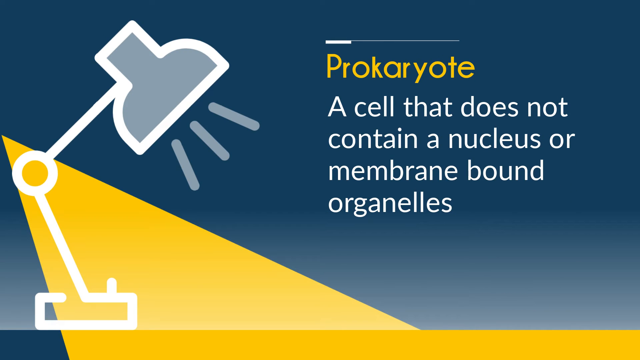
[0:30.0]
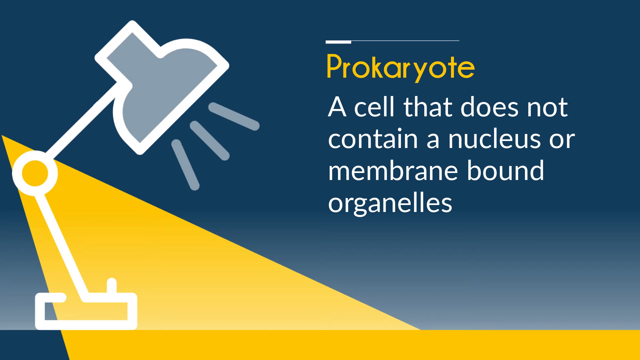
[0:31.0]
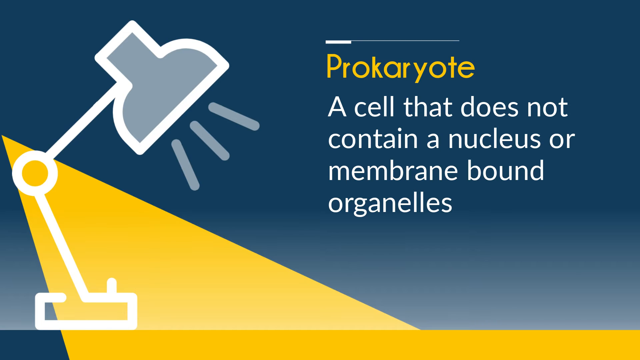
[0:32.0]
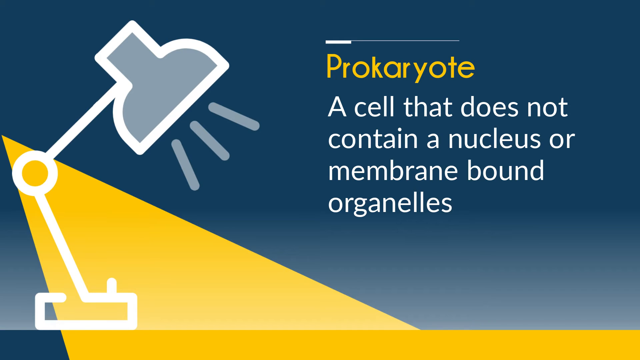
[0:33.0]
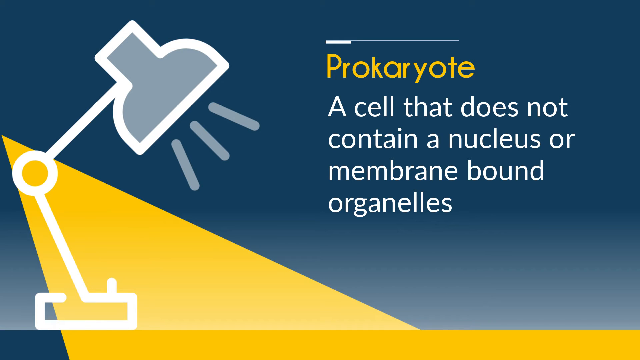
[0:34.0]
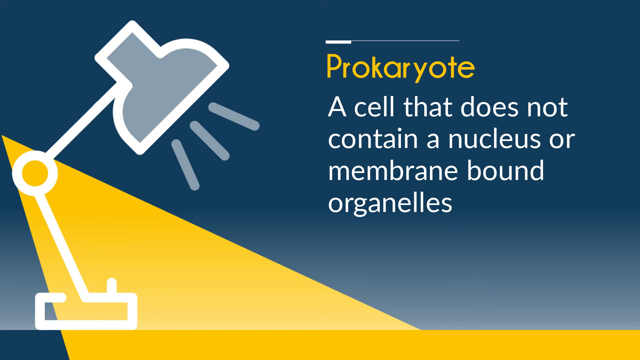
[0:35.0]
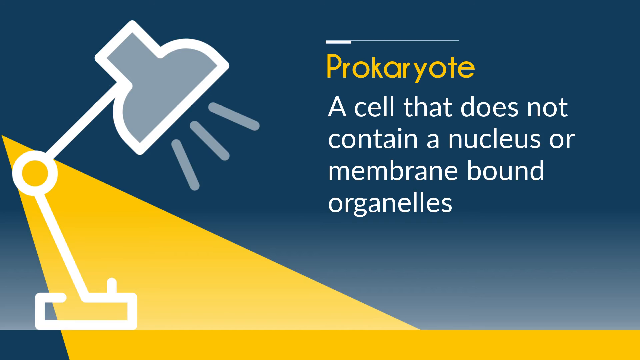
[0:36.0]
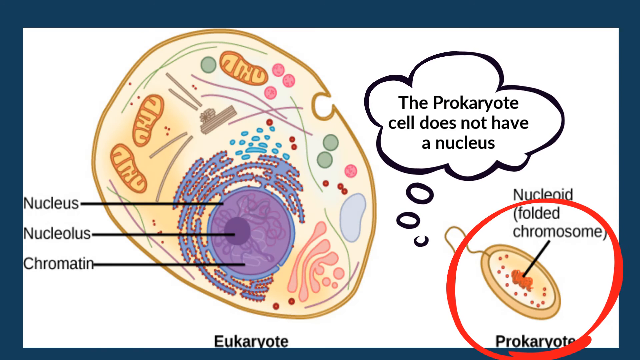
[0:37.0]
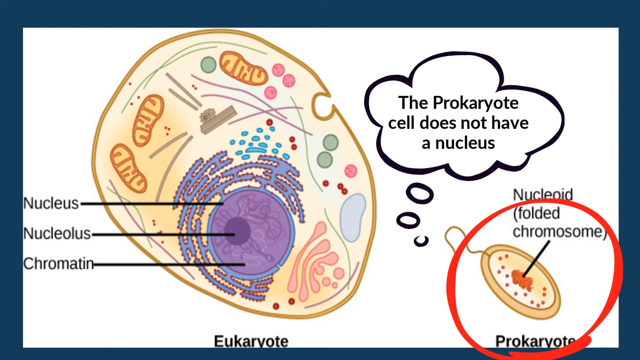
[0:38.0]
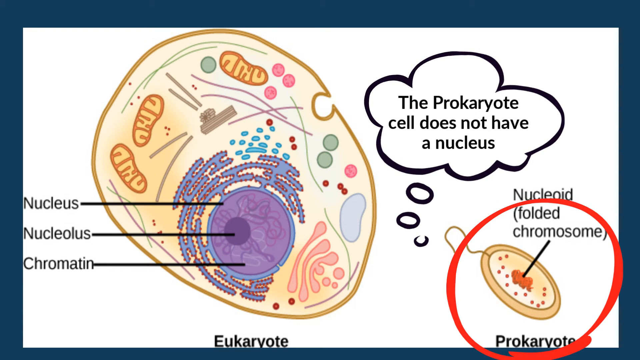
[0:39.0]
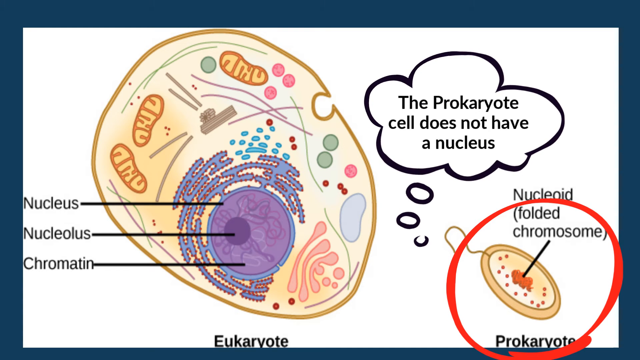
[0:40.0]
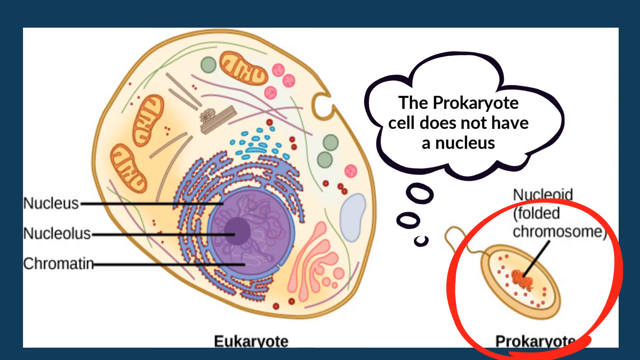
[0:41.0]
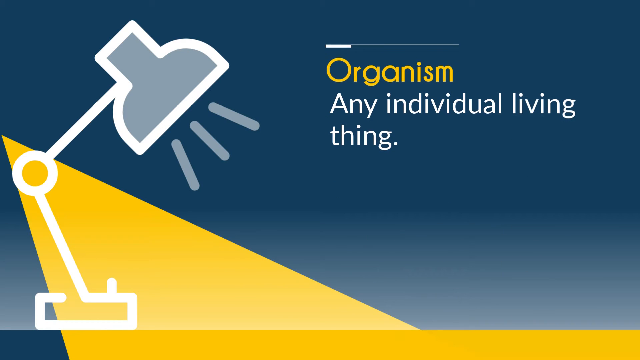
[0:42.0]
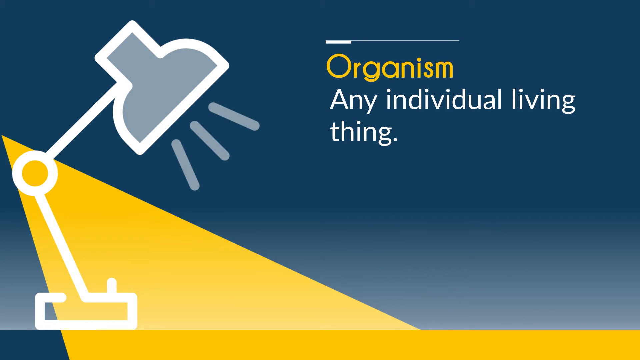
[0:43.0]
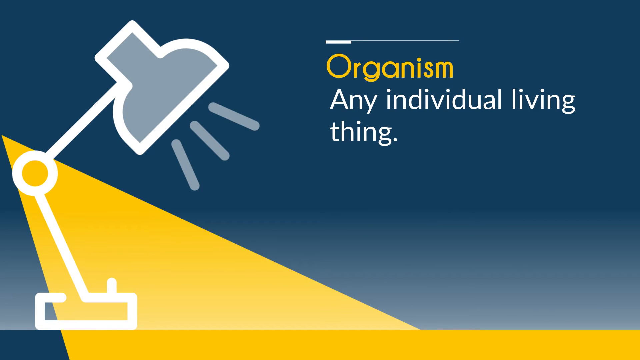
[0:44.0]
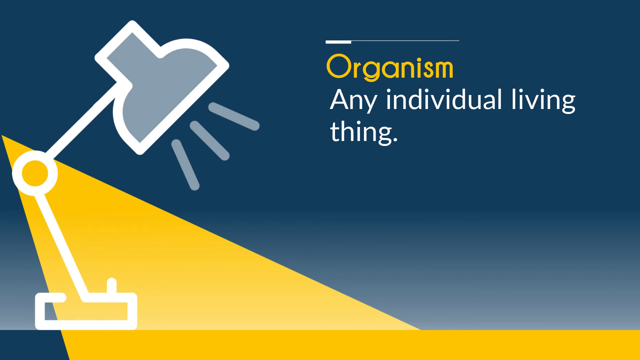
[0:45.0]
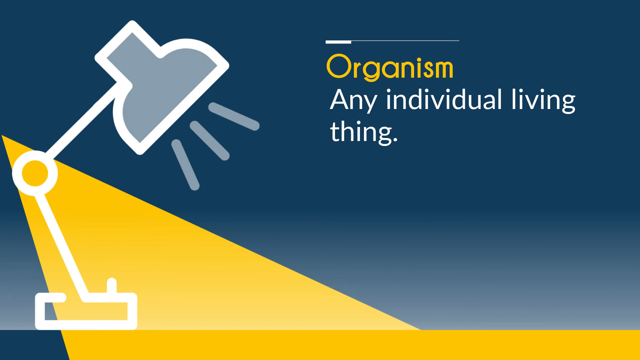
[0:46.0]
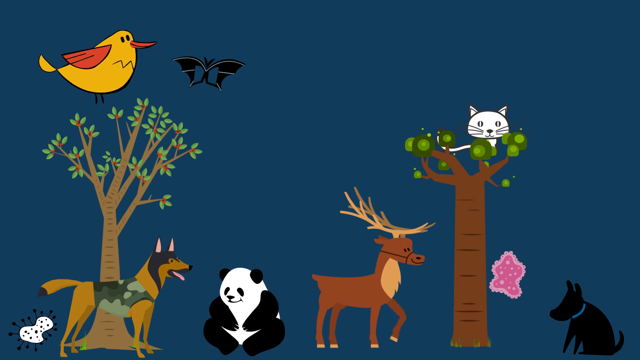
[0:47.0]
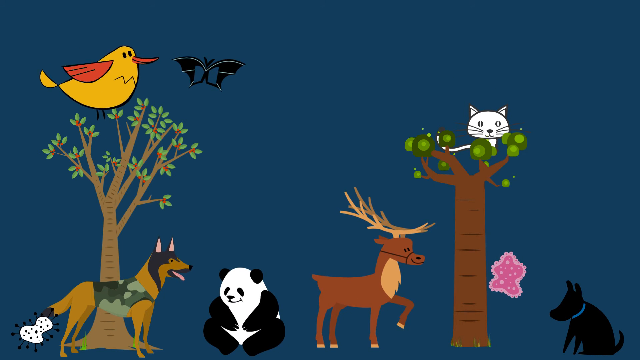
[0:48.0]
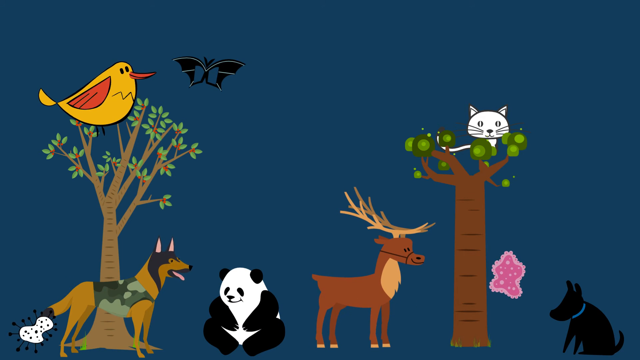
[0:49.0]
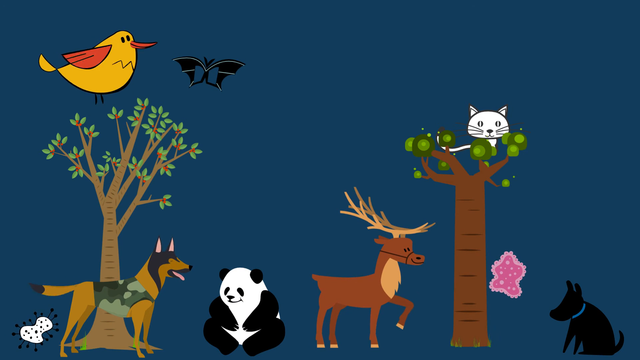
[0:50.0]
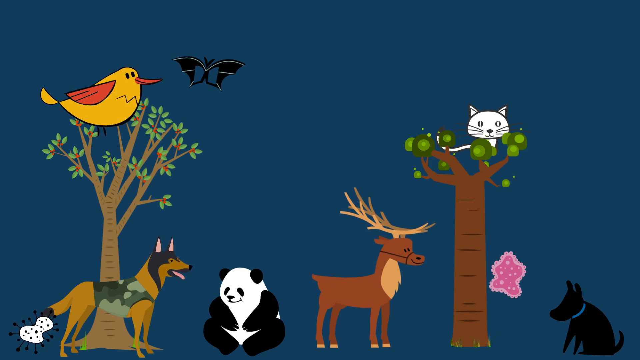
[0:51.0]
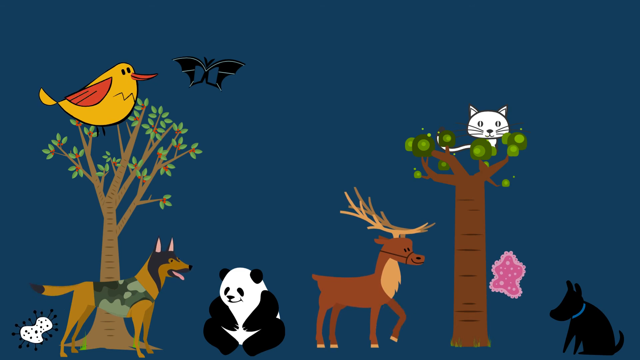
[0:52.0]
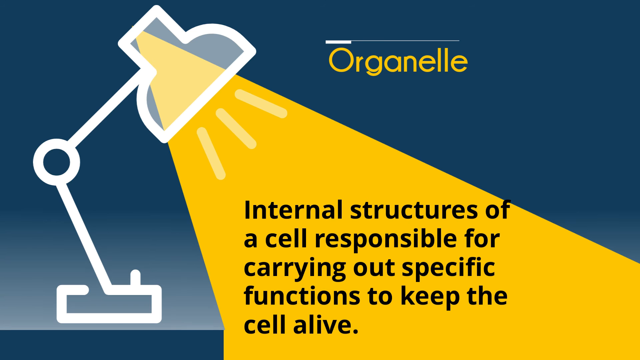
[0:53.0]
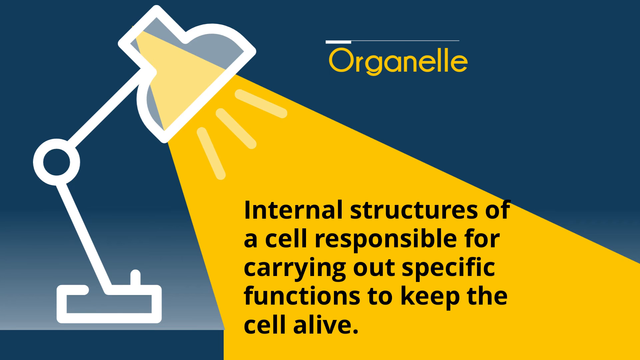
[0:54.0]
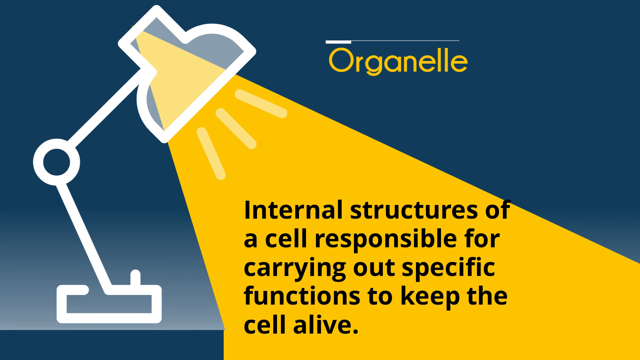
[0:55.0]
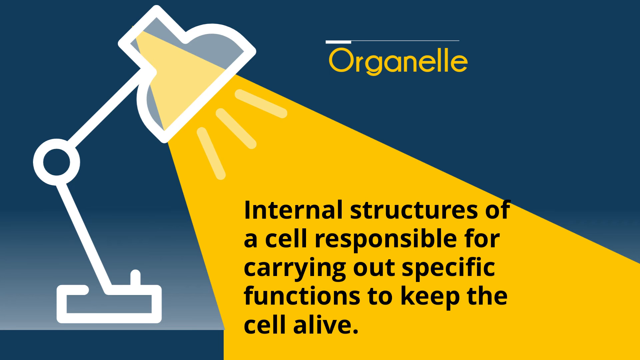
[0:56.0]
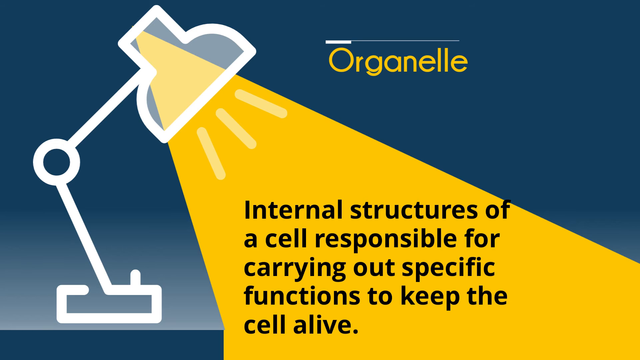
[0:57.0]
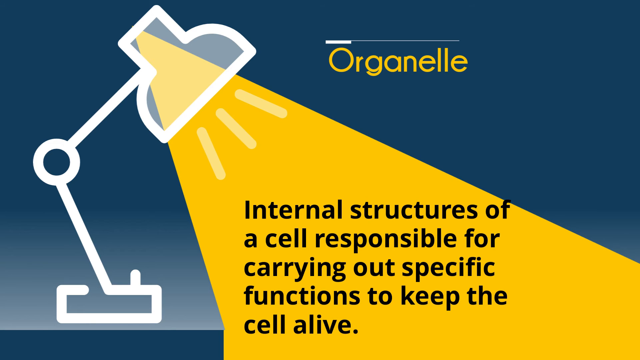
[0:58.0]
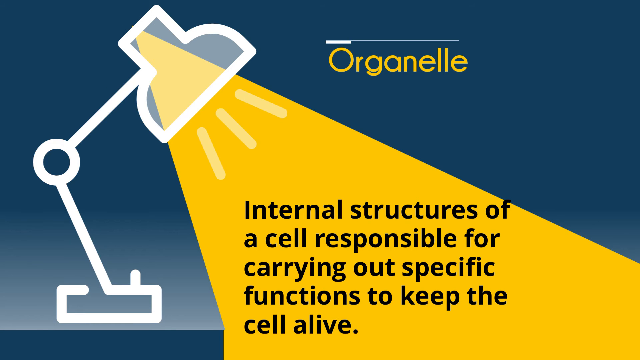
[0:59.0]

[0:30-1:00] The video continues through the vocabulary words with the prokaryote, defined as "a cell that does not contain a nucleus or membrane bound organelle." At the bottom right, text reads "nucleoid folded chromosome," and the chromosome there is kind of circled. Next comes organism, defined as "any individual living thing," illustrated with cats, birds, deer, dogs and similar animals. Then organelle is defined as "the internal structure of a cell responsible for carrying out specific functions to keep the cell alive," without a visual diagram yet.